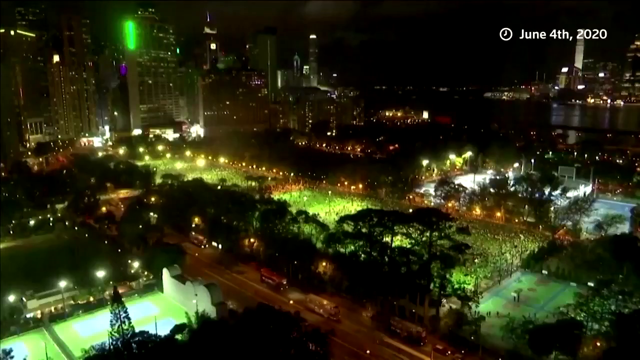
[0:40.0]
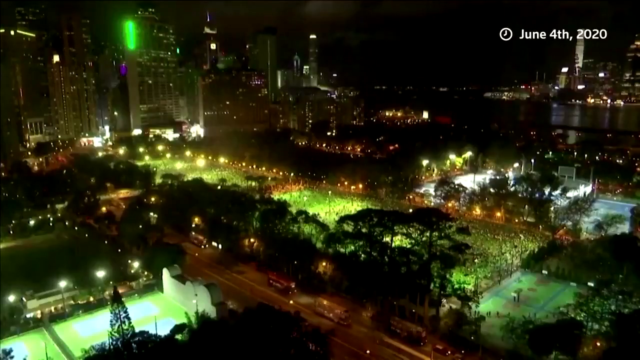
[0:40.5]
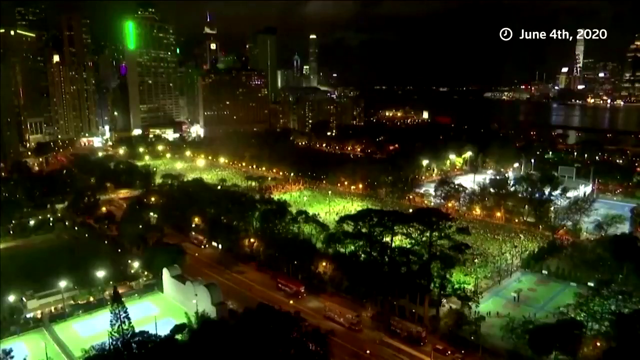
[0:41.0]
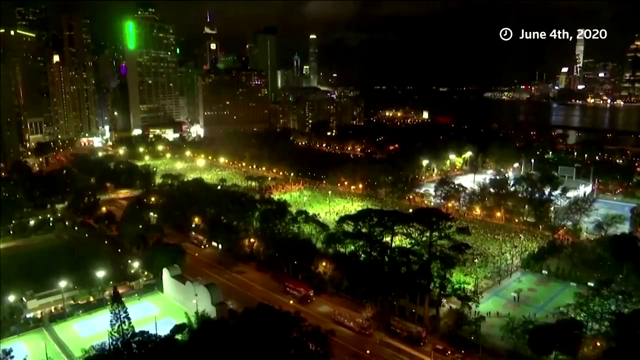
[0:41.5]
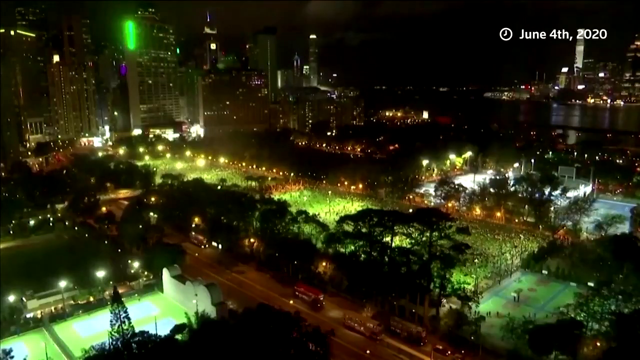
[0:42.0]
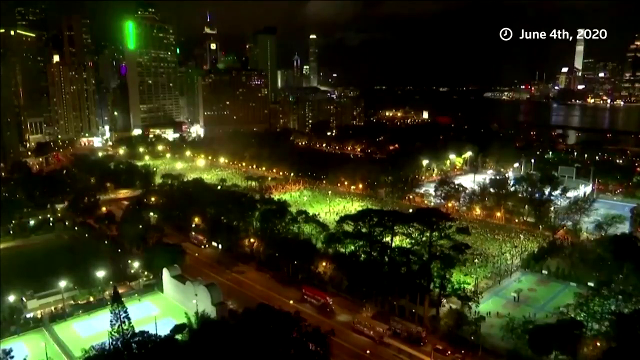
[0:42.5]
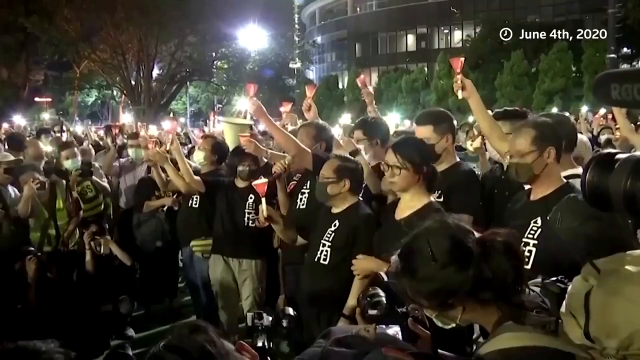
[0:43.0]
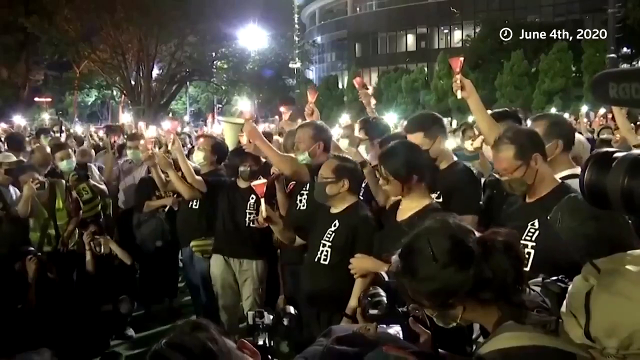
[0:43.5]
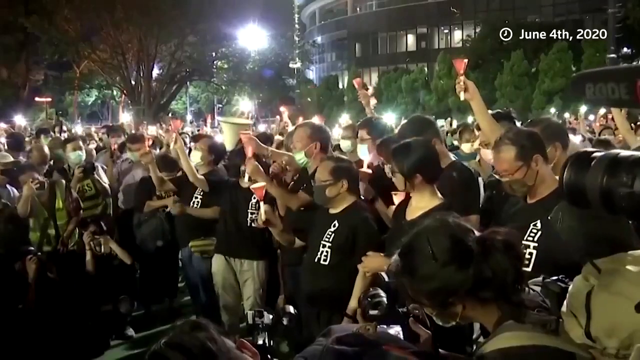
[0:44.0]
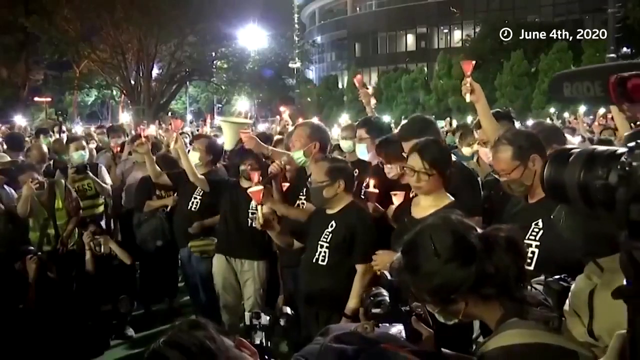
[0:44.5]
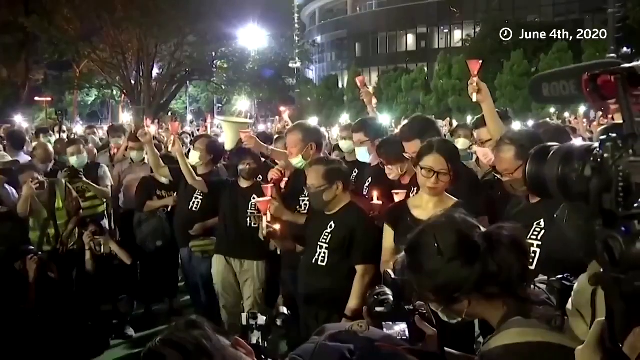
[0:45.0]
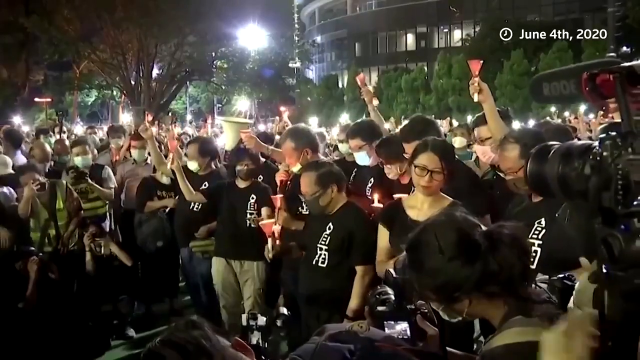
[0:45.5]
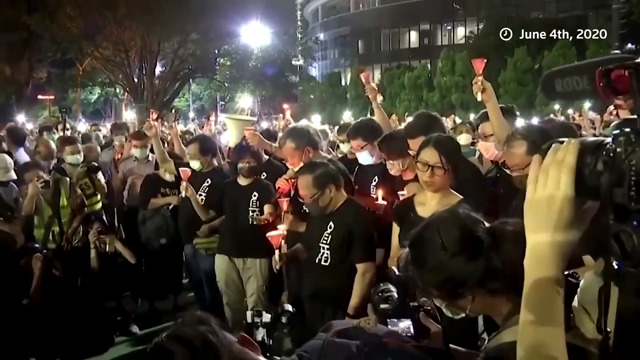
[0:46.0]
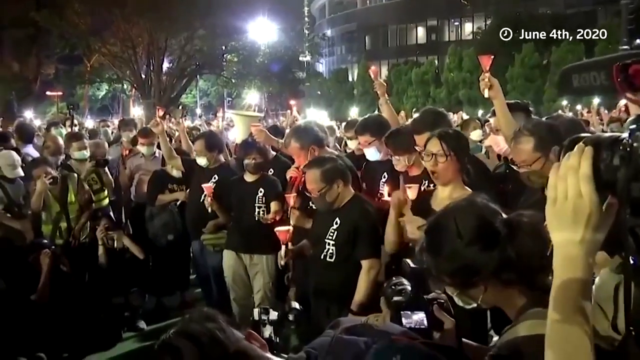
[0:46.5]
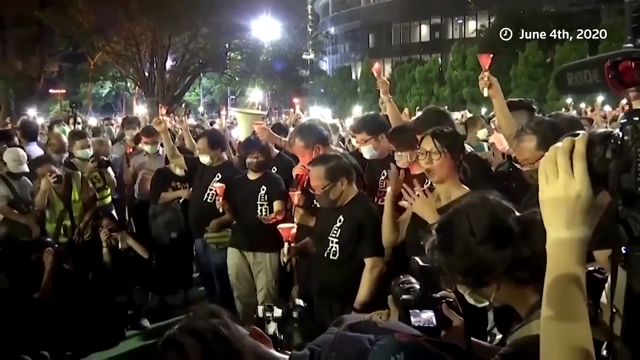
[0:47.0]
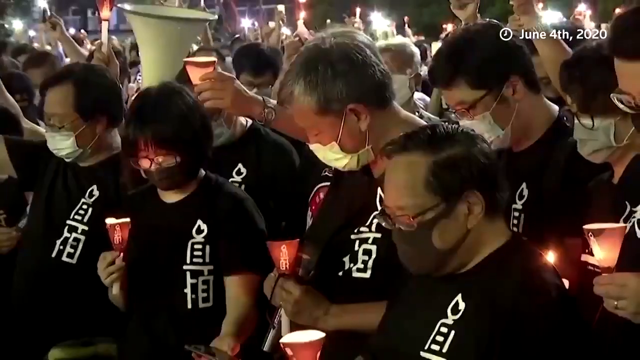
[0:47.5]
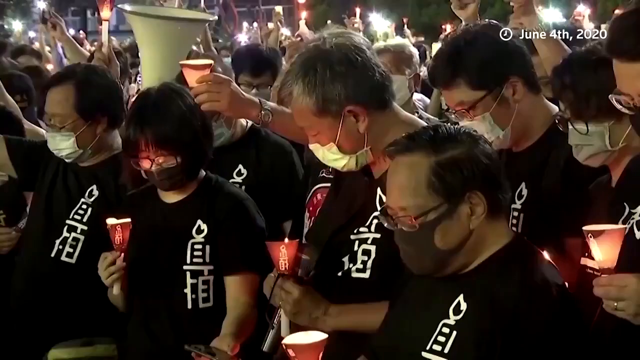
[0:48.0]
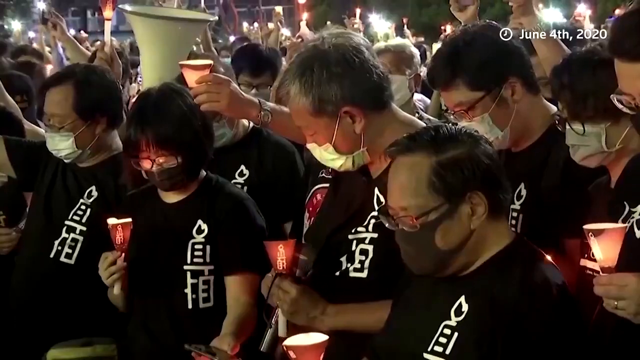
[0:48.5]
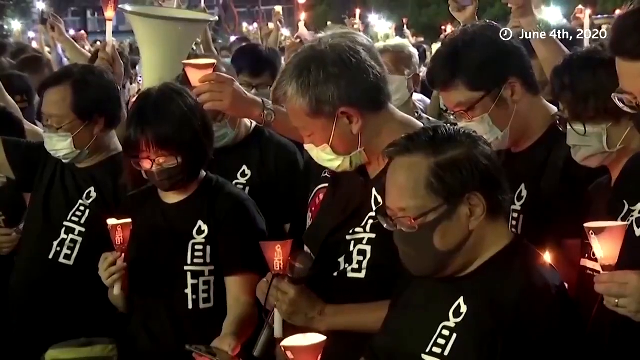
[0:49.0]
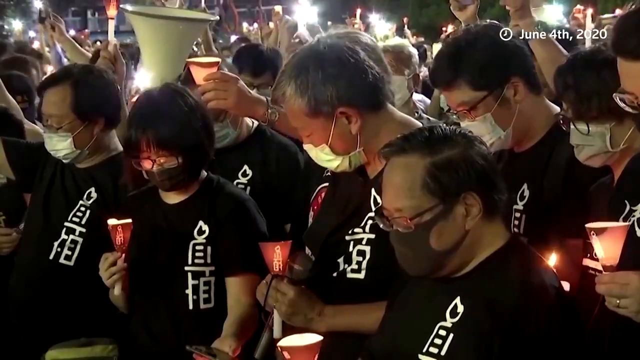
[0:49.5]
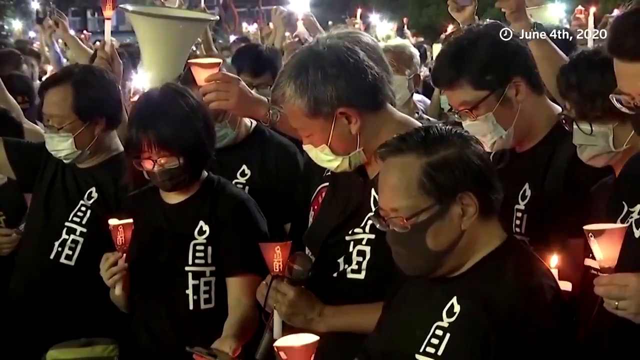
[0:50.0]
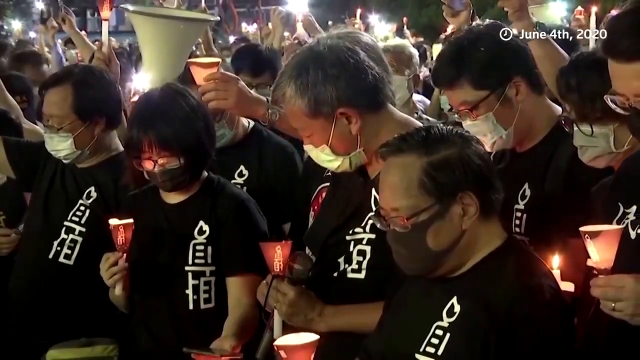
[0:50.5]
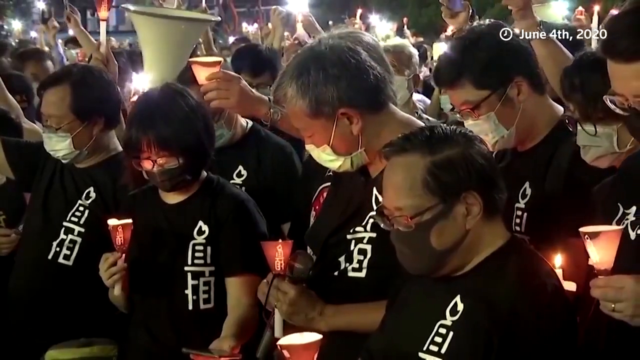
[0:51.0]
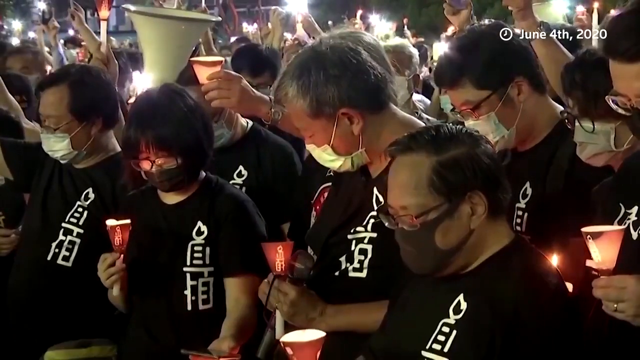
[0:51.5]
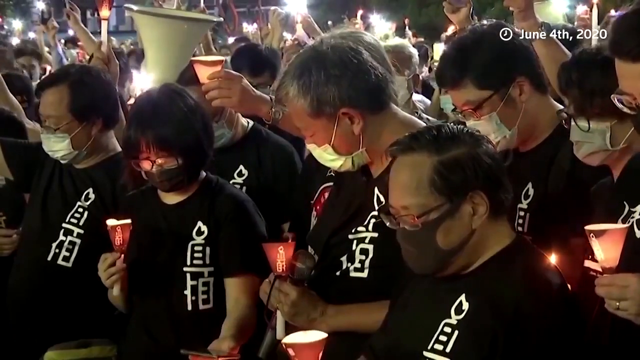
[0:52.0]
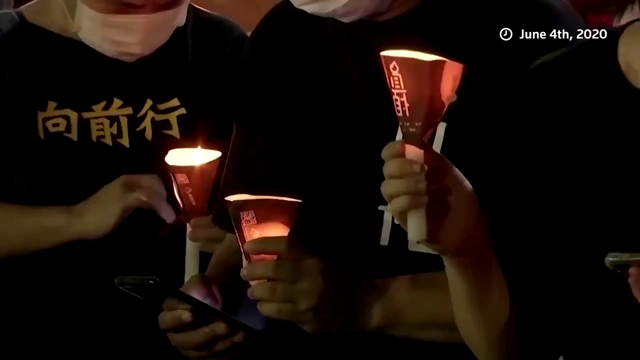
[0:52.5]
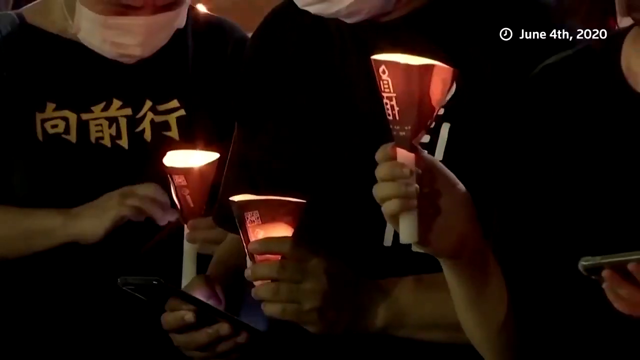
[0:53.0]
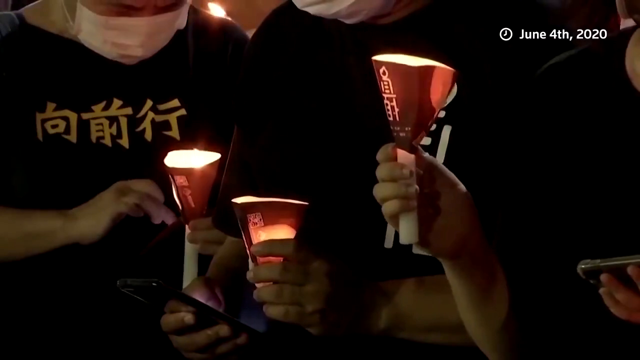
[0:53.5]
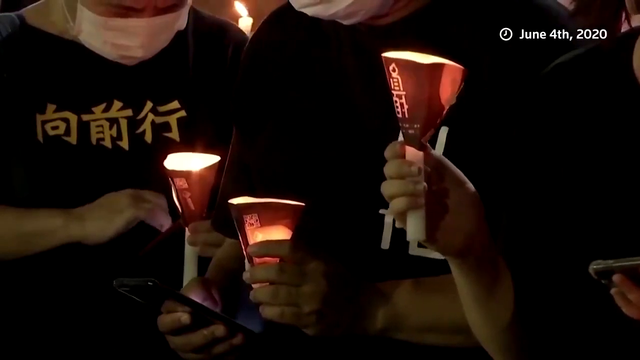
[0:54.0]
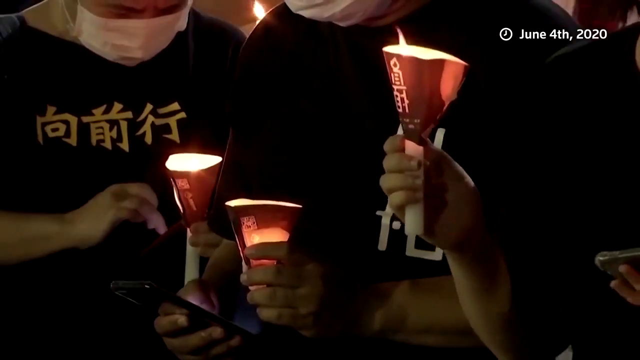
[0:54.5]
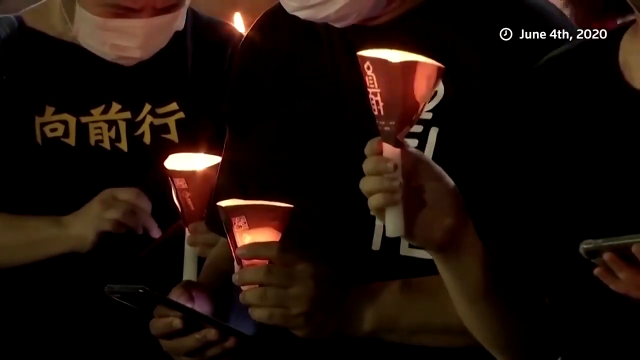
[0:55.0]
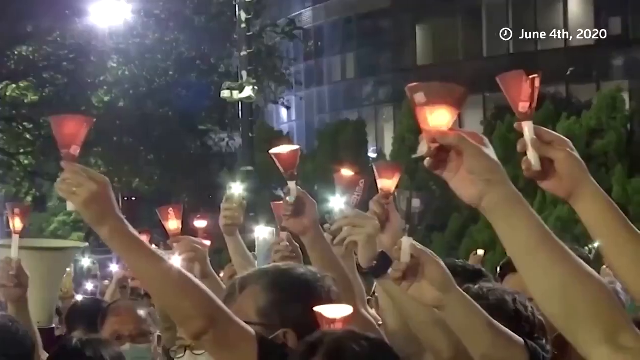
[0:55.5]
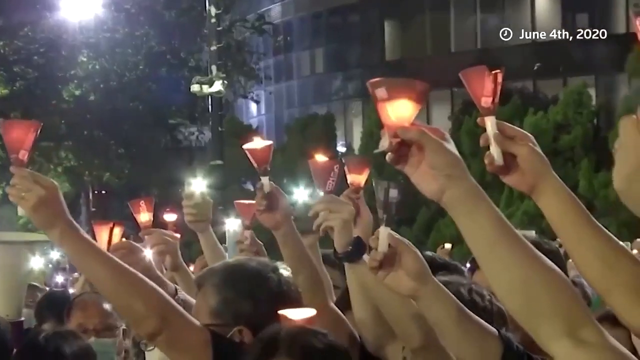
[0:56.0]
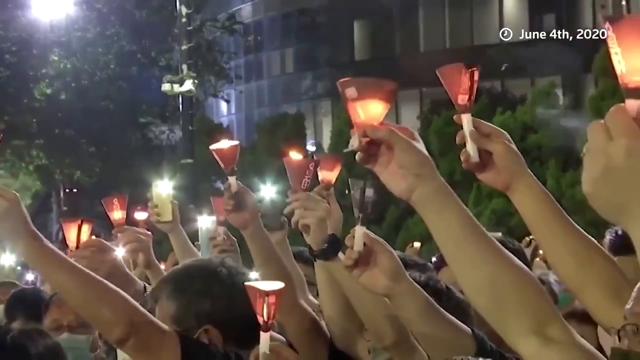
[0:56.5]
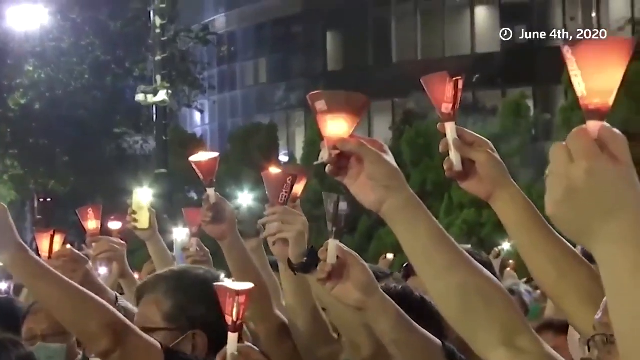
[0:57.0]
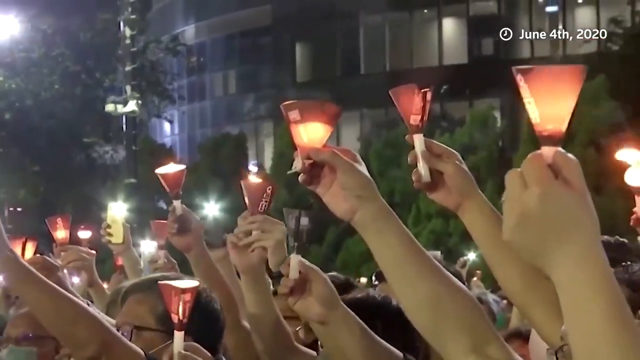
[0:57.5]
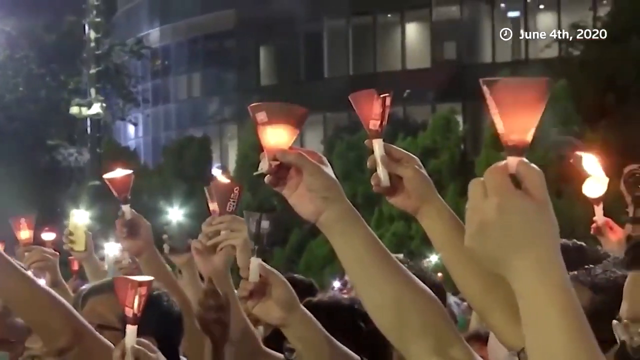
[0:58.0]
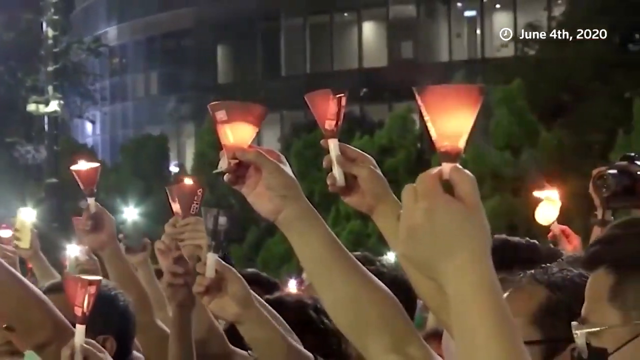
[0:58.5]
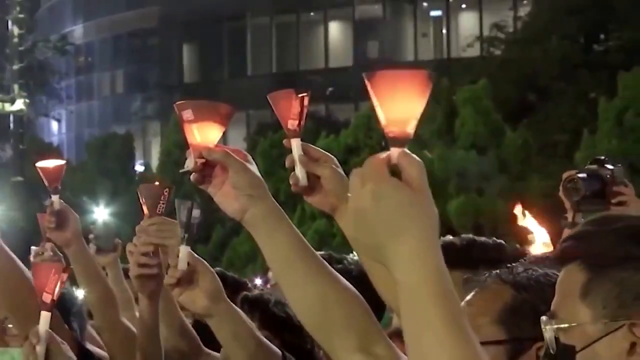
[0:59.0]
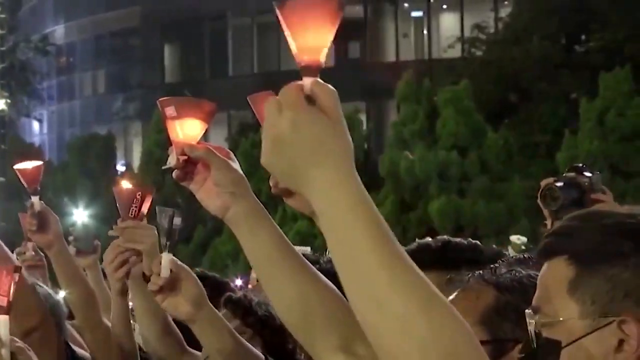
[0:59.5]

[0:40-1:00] A group of people is outside in a still image from the 4th of June 2020, showing a large gathering, apparently from Hong Kong, holding up small flames or copies of flames. Towards the left of the picture, the people are being photographed by media. The image then starts moving, and the people appear to be holding some sort of vigil, seemingly having a moment of quiet reflection, perhaps a moment's silence in remembrance of a day. They hold aloft what appear to be small glass or plastic upside-down cone shapes with a slightly red hue, each containing a flame that appears to be a real flickering candle. There are many people, perhaps hundreds, all wearing quite dark clothes, suggesting it may be a somber occasion.